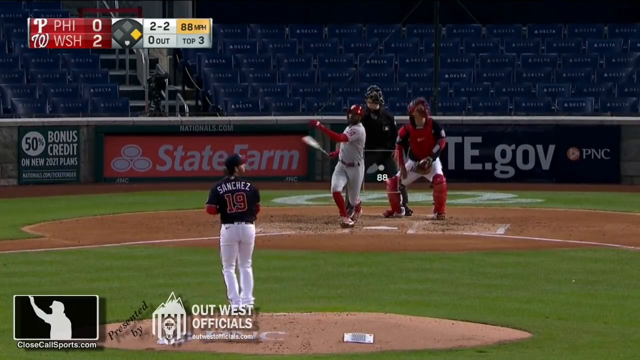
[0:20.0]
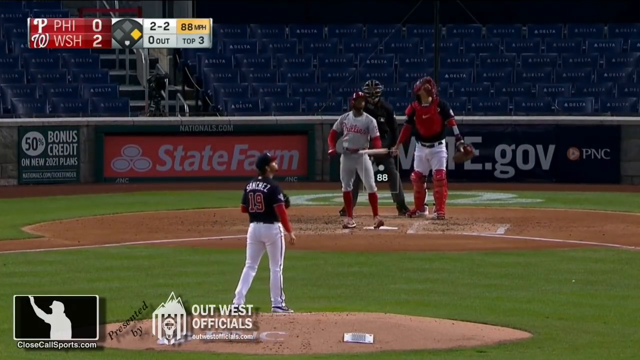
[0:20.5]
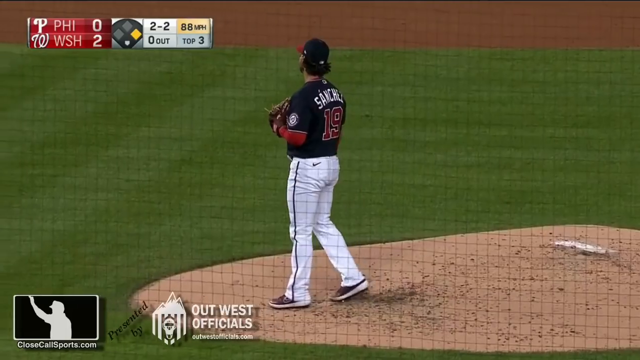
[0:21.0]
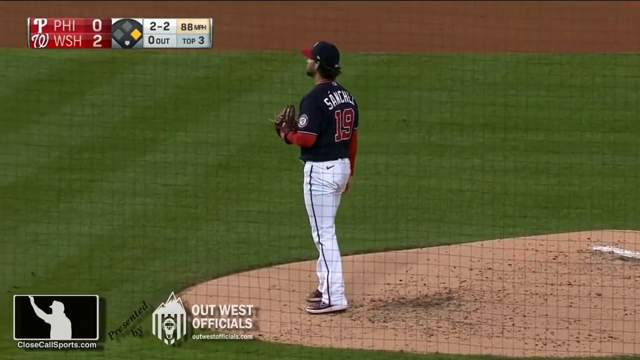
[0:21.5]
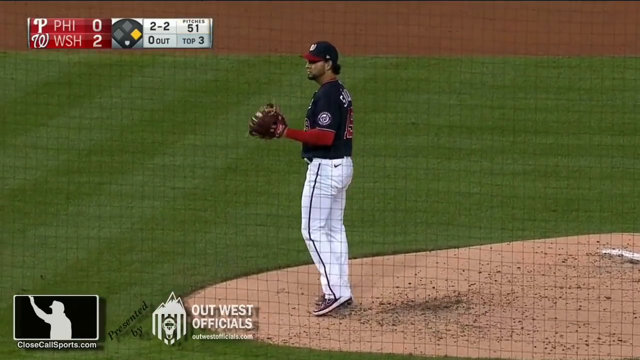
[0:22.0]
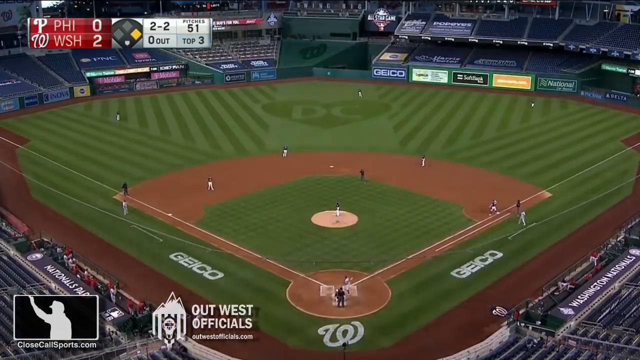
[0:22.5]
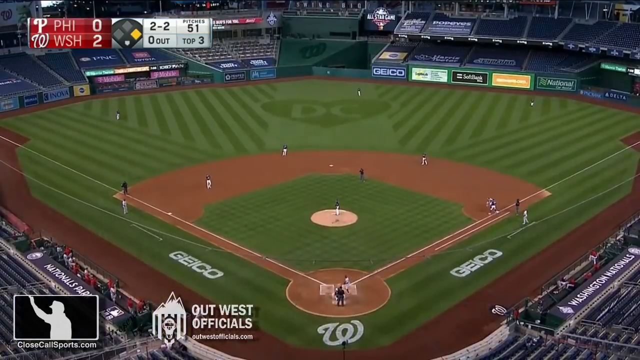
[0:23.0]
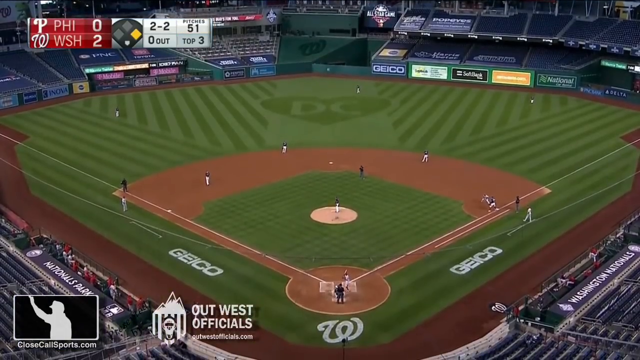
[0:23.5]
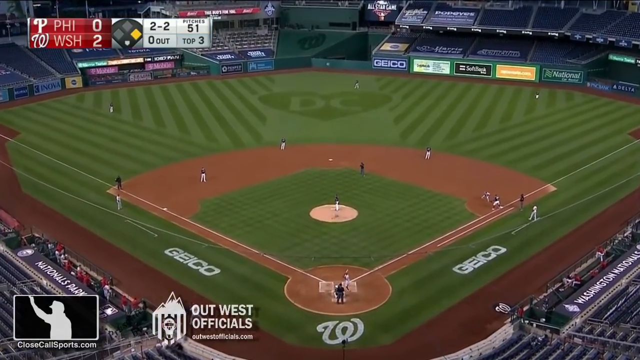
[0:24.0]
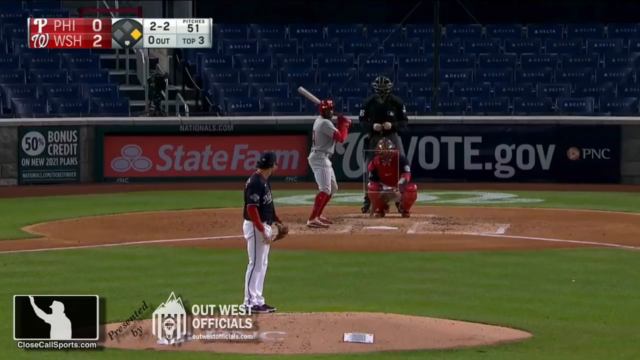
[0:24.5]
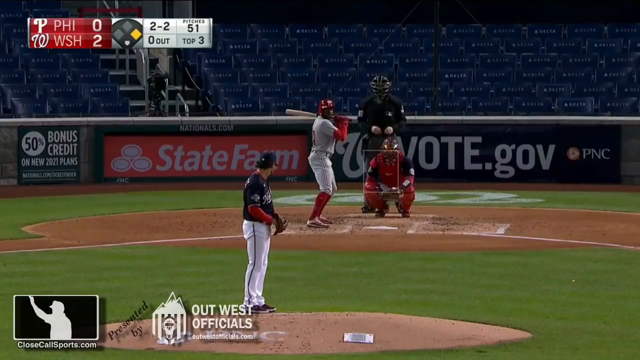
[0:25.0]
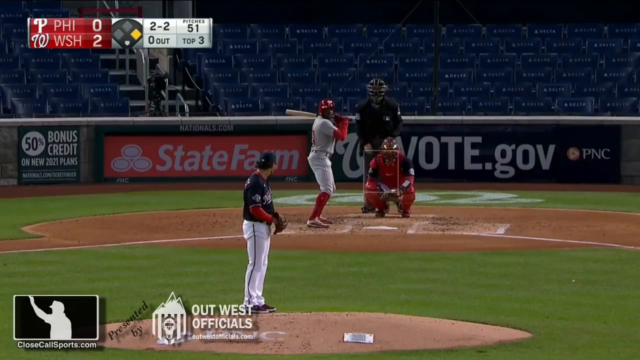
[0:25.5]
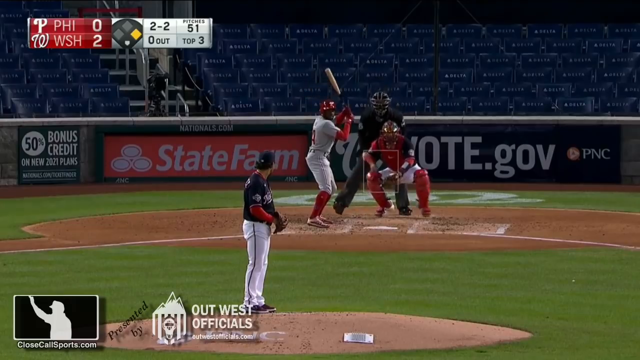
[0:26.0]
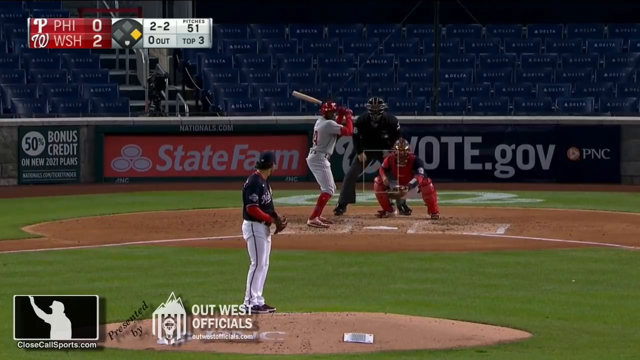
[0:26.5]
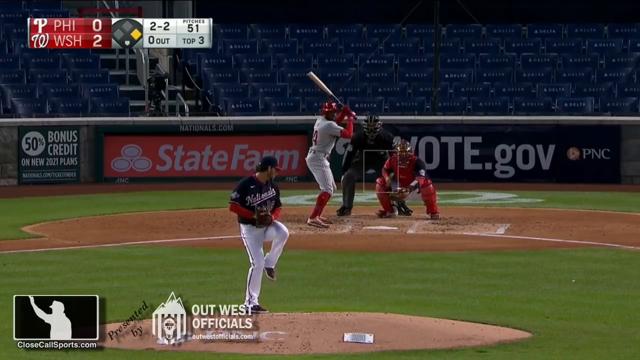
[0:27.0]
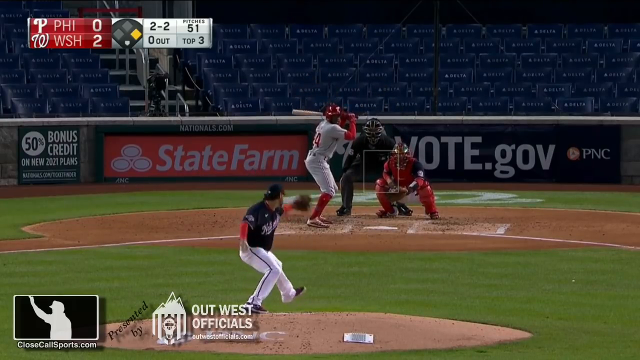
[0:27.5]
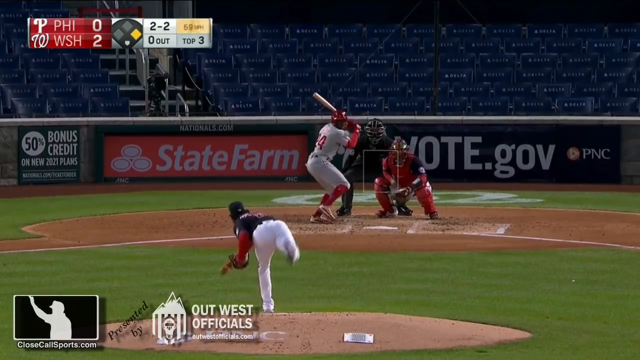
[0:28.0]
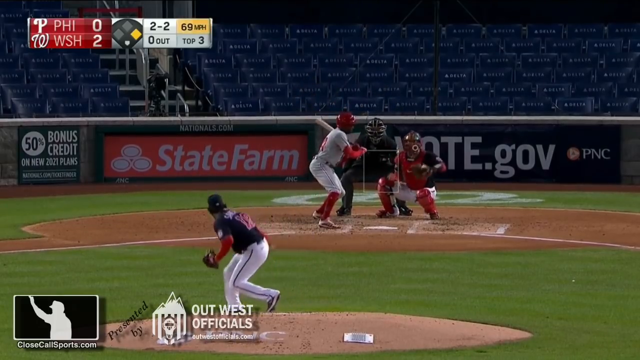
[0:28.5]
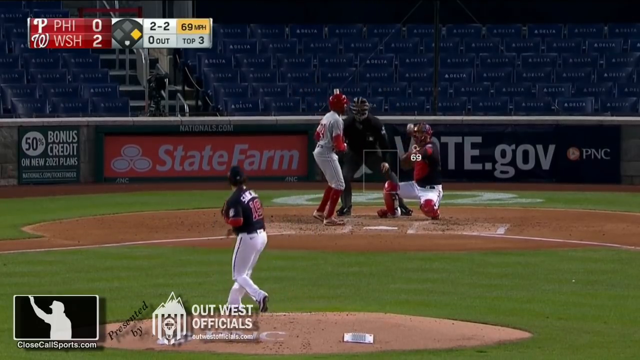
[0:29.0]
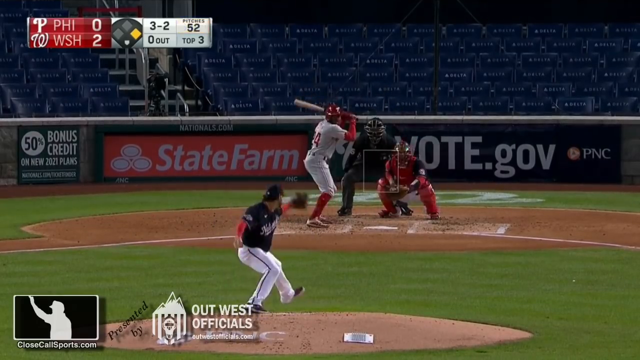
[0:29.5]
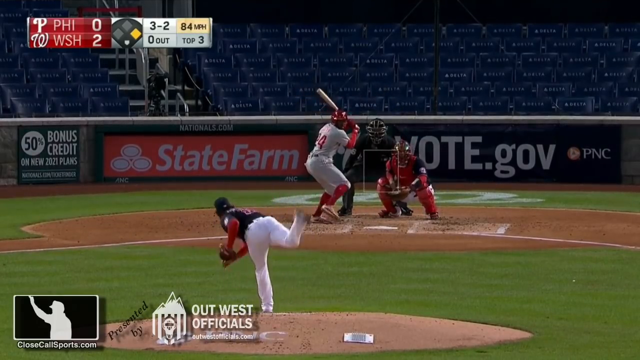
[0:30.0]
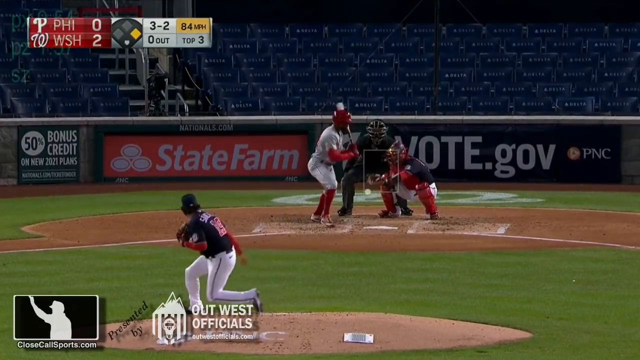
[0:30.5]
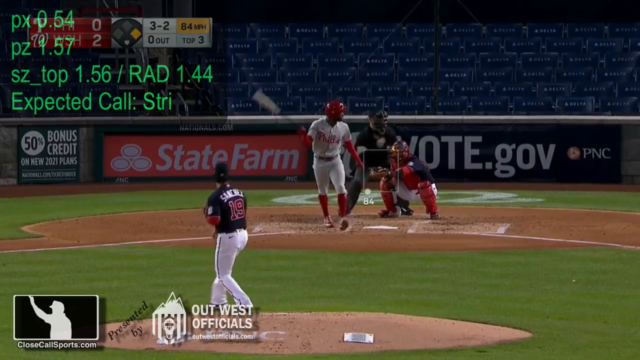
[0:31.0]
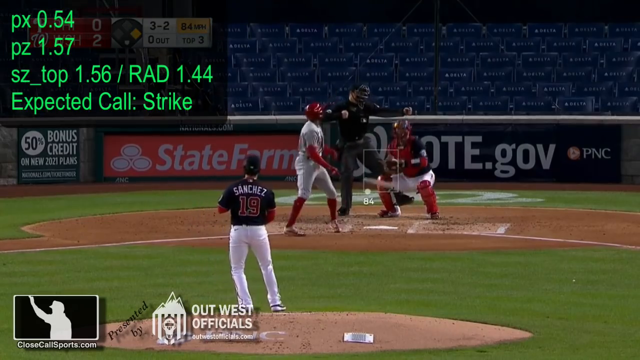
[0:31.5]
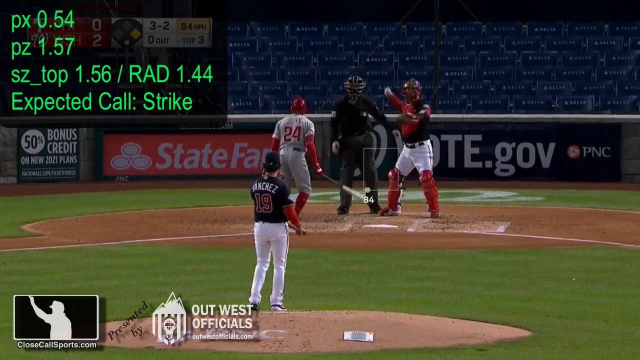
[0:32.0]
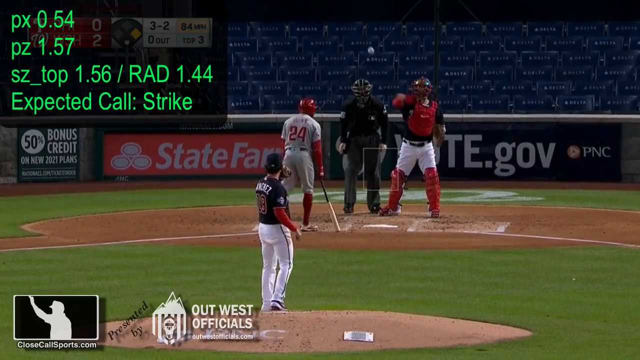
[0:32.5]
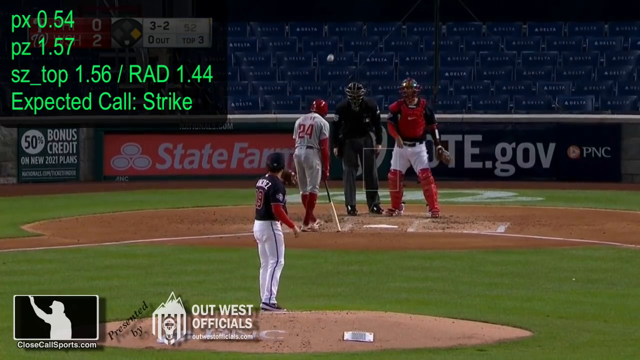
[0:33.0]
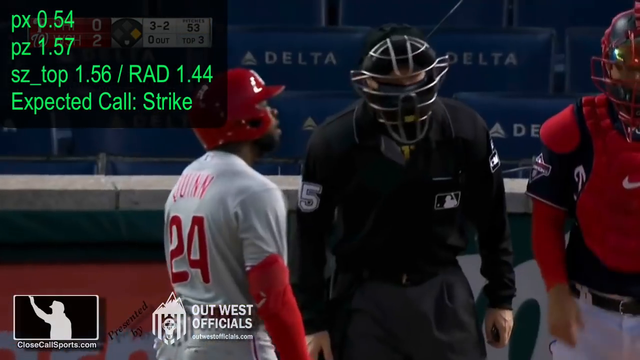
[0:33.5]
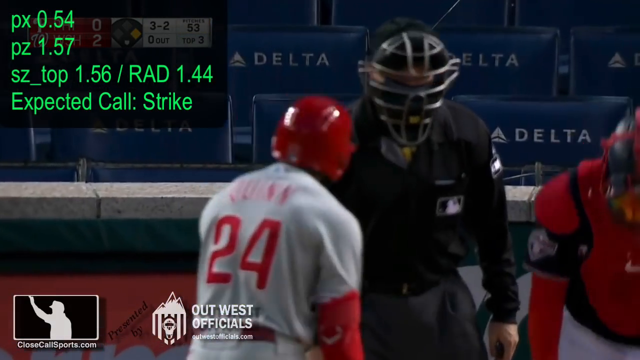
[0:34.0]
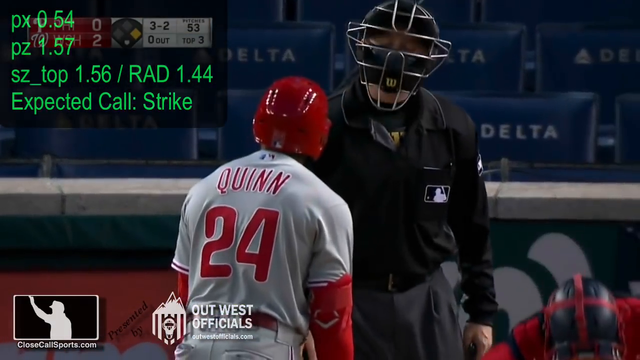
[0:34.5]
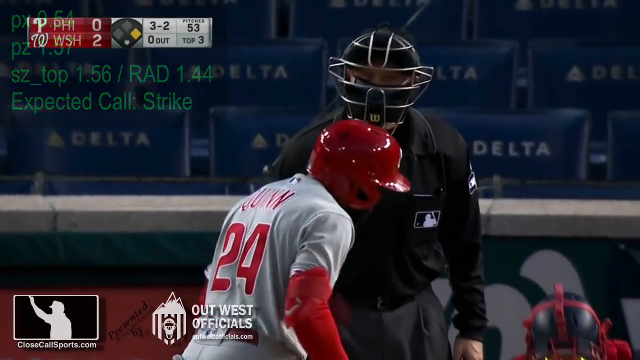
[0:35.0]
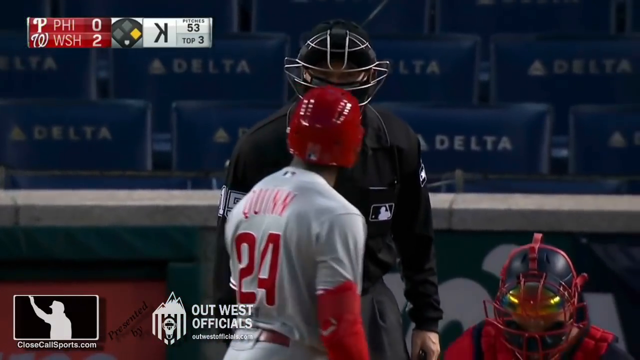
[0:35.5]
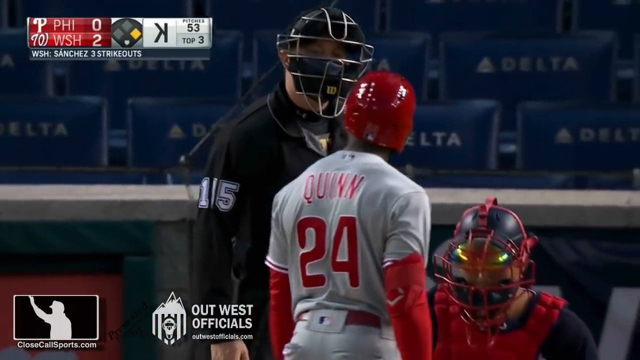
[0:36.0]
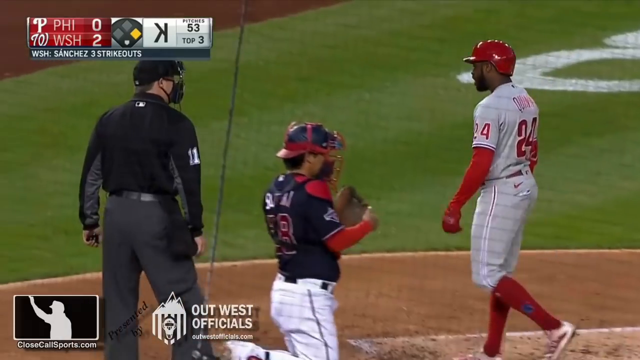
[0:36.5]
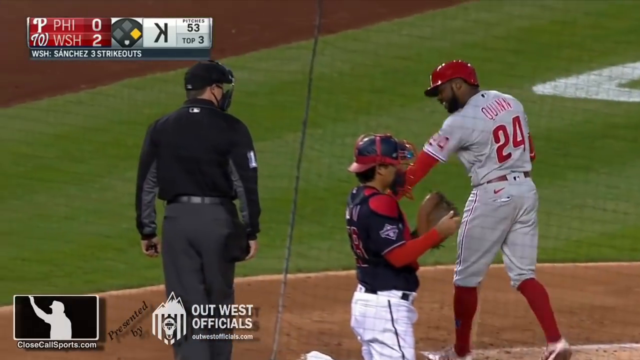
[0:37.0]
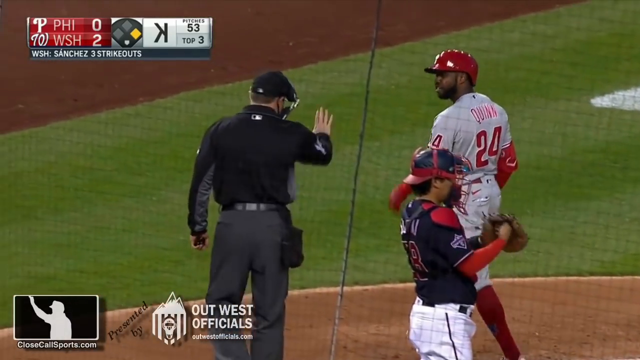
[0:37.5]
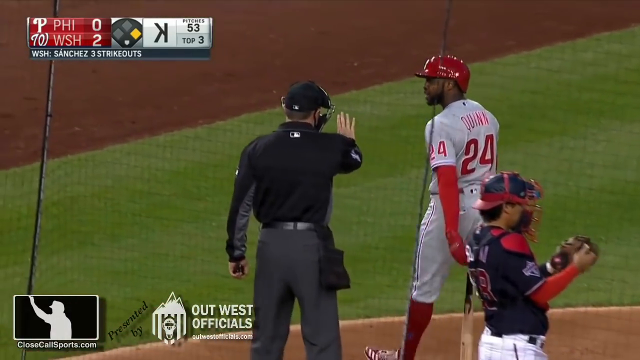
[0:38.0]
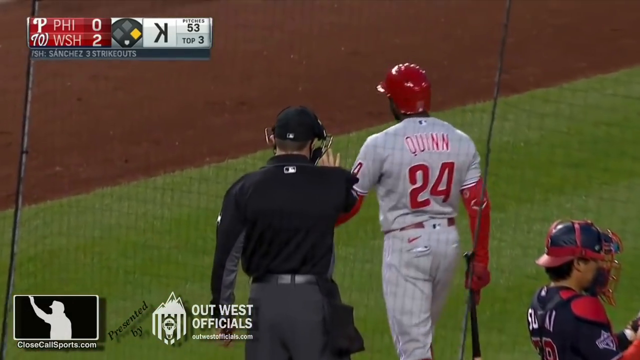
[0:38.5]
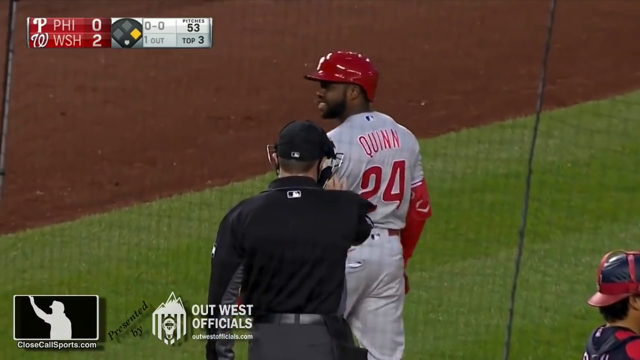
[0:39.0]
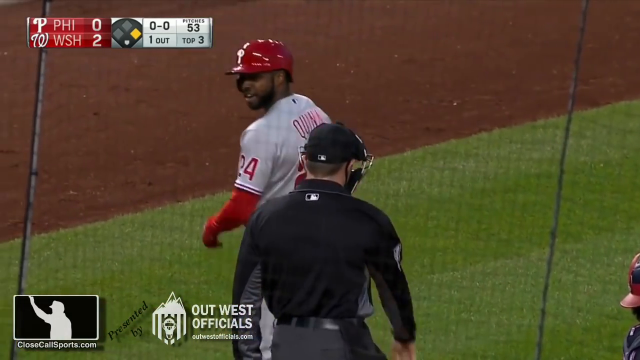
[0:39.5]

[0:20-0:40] What looks like a professional baseball game is underway. The field is mowed in stripes, and the capital letters "DC" are set into the grass. Text appears in the upper left corner reading "PX 0.54, PZ 1.57", a line ending "rad 1.44", and "expected call strike". The batter argues with the referee or umpire and seems very upset about how his count was called. There are not many fans in the crowd.